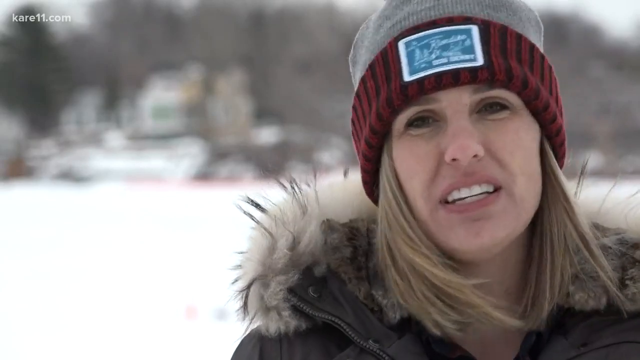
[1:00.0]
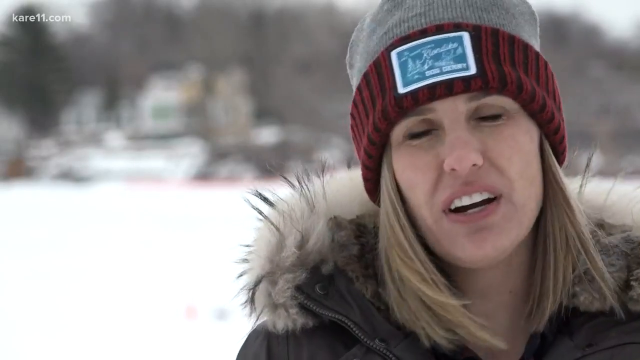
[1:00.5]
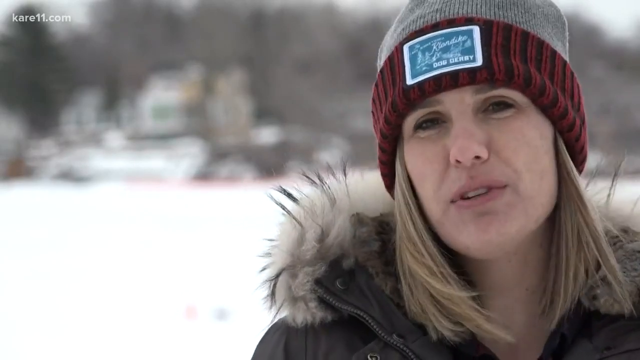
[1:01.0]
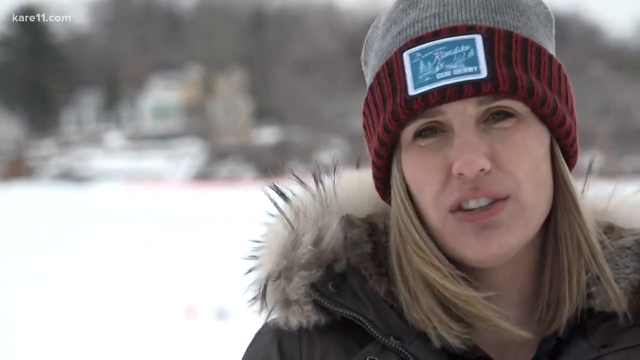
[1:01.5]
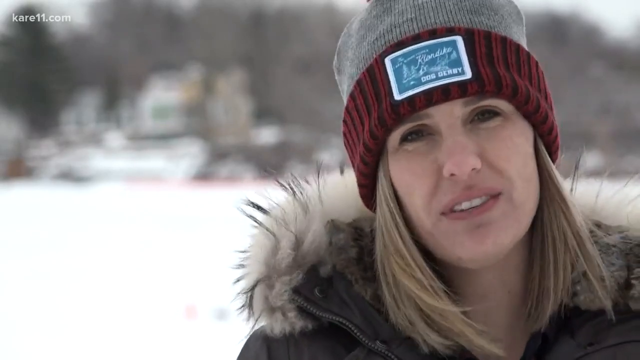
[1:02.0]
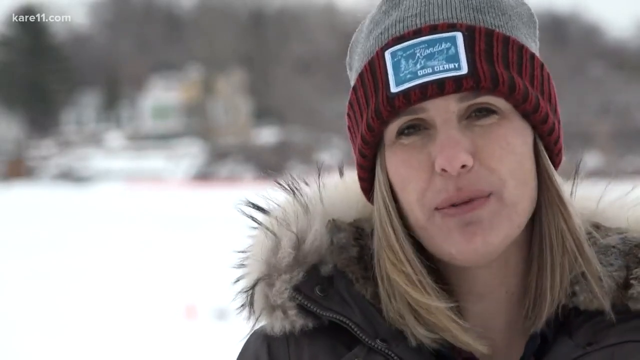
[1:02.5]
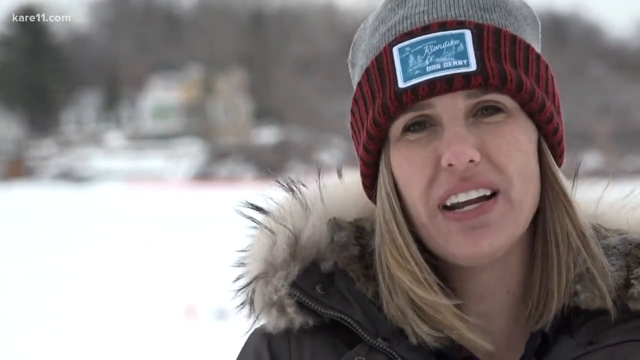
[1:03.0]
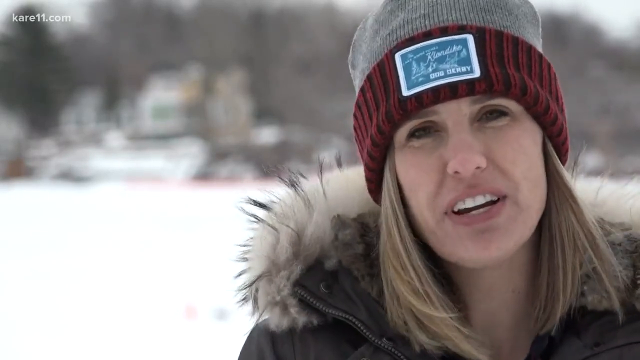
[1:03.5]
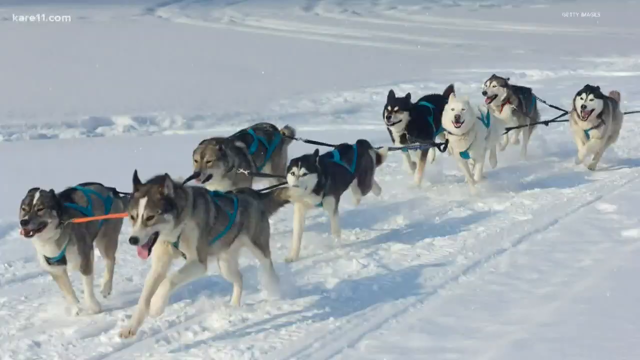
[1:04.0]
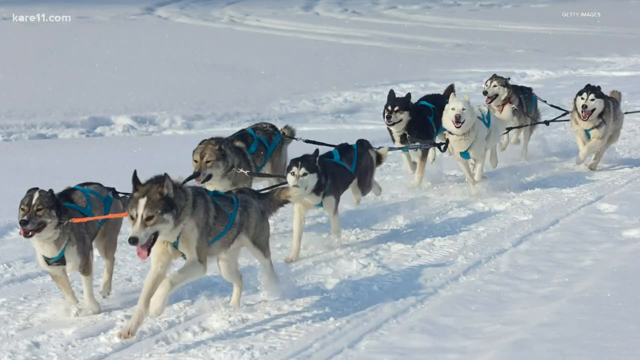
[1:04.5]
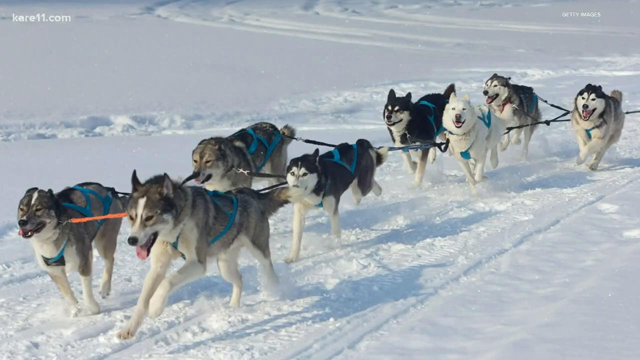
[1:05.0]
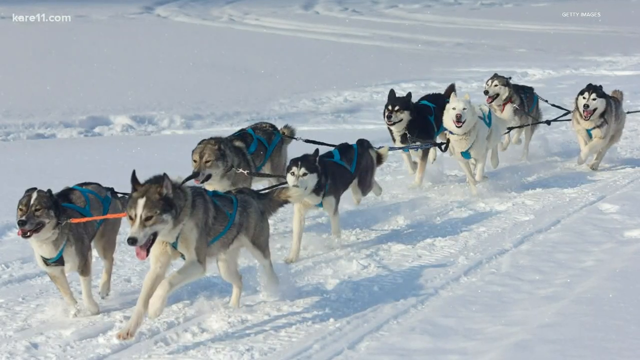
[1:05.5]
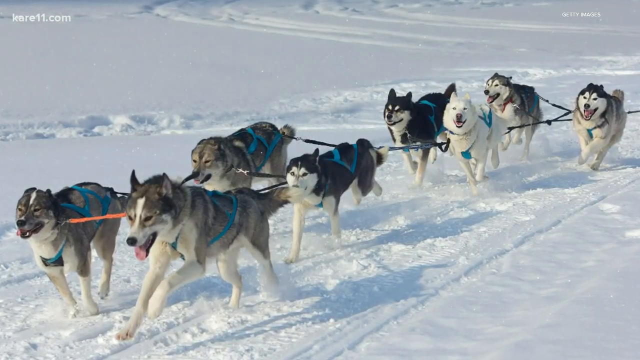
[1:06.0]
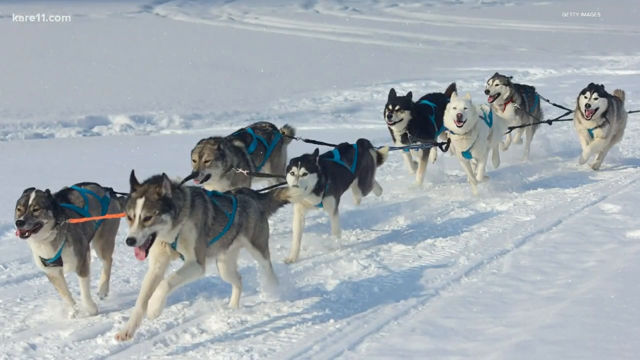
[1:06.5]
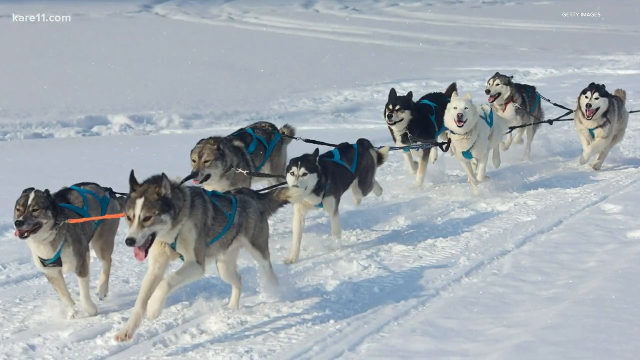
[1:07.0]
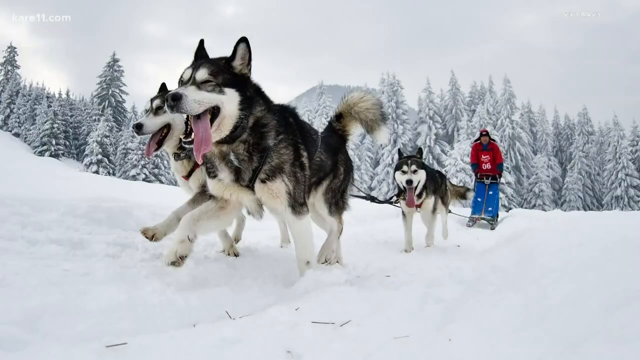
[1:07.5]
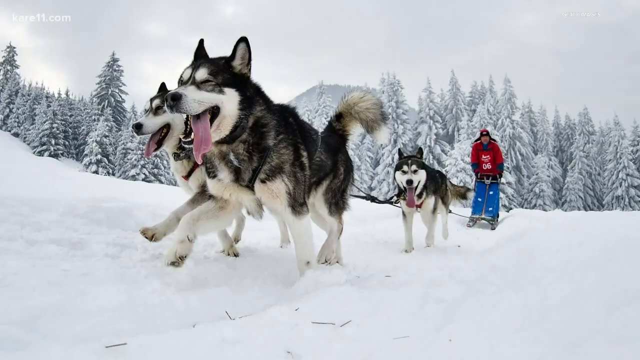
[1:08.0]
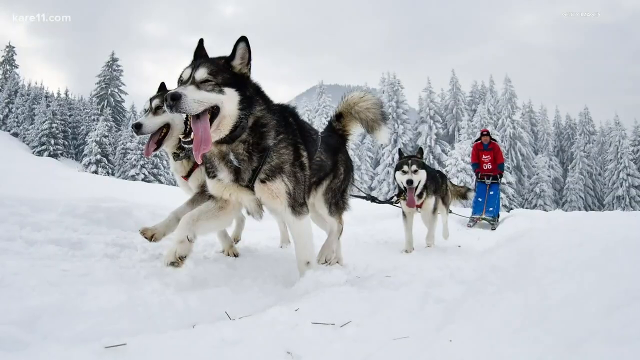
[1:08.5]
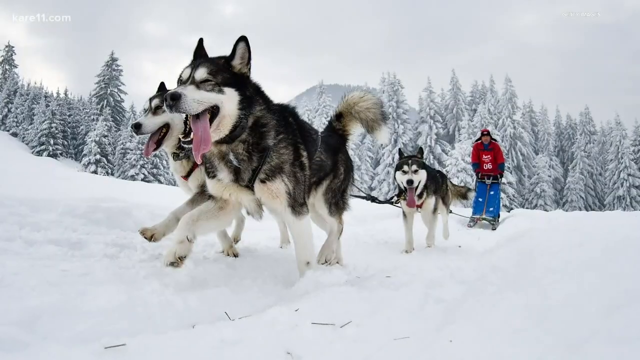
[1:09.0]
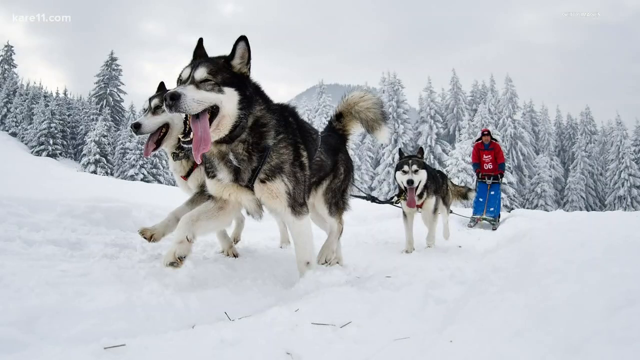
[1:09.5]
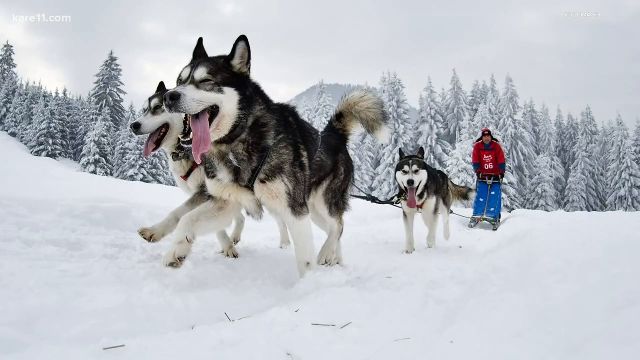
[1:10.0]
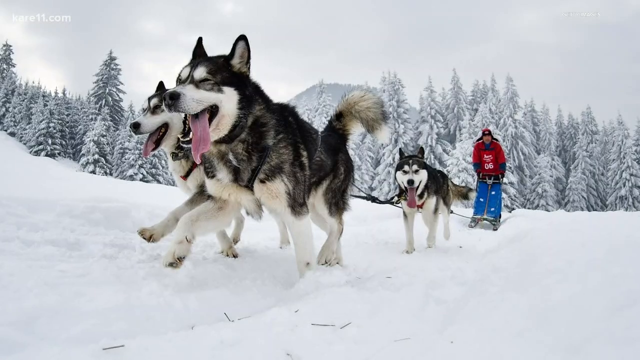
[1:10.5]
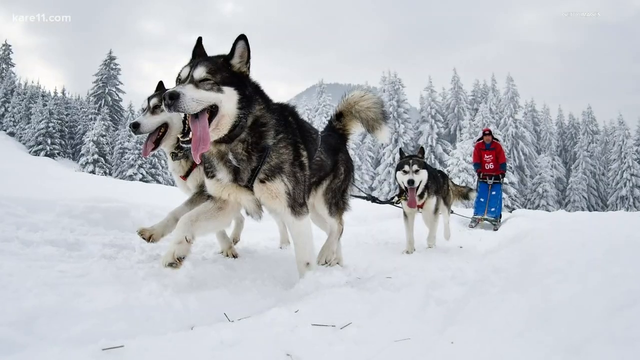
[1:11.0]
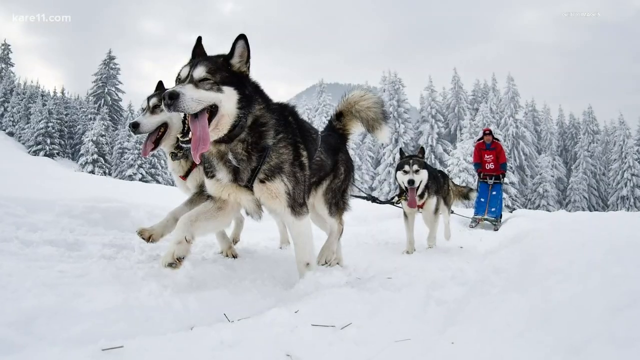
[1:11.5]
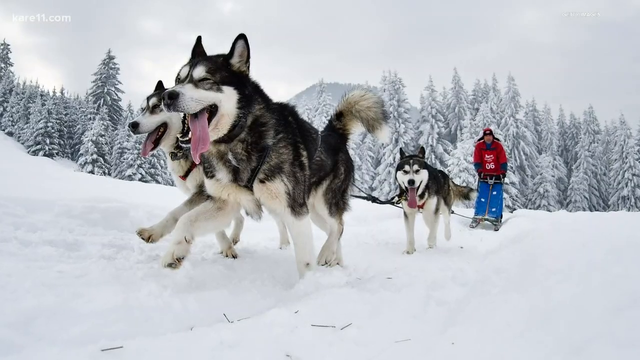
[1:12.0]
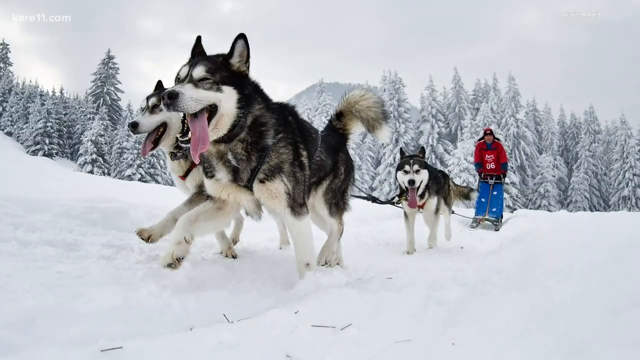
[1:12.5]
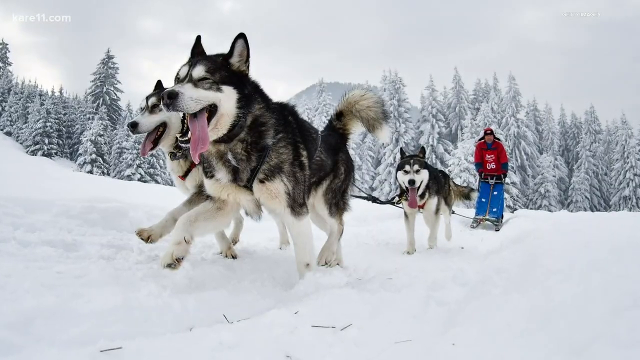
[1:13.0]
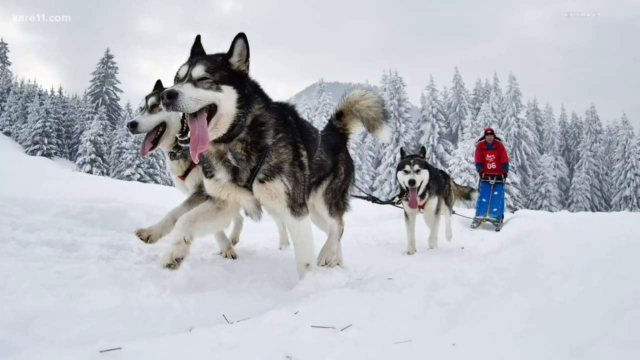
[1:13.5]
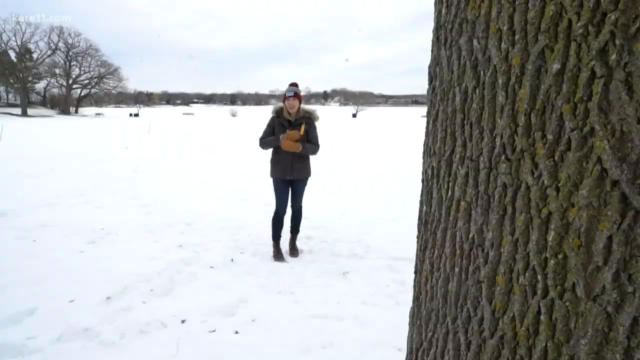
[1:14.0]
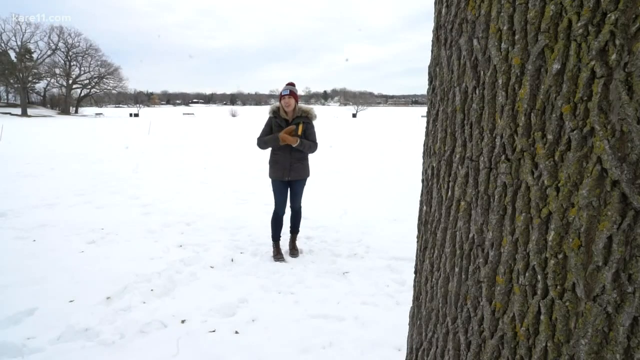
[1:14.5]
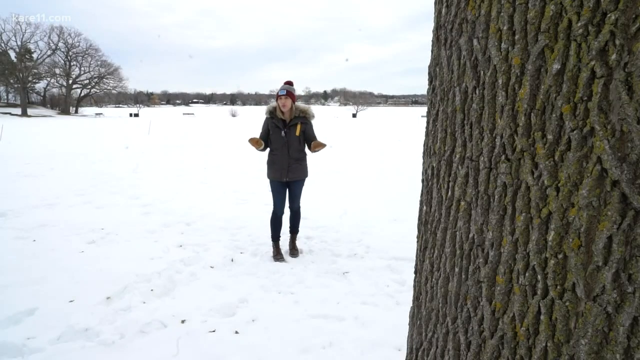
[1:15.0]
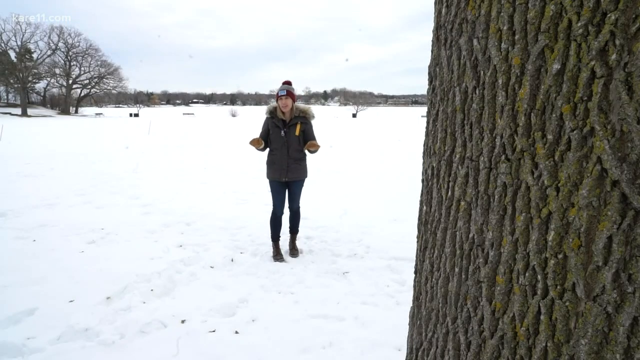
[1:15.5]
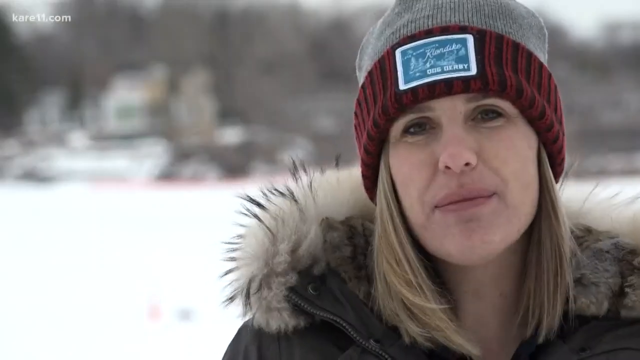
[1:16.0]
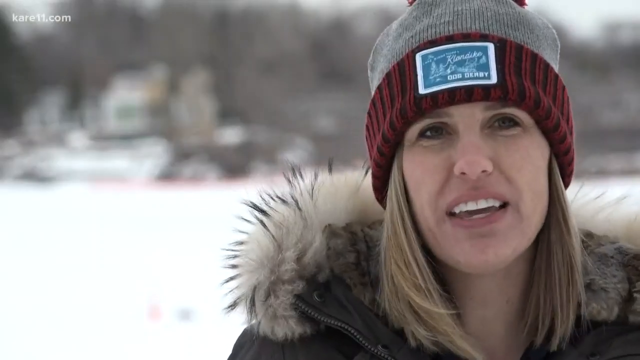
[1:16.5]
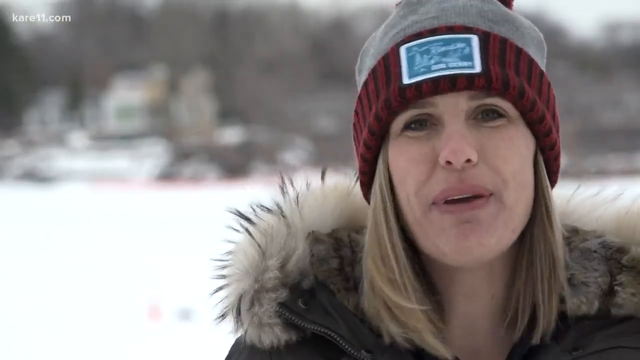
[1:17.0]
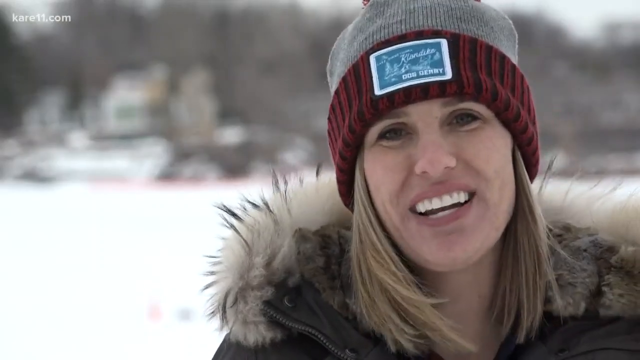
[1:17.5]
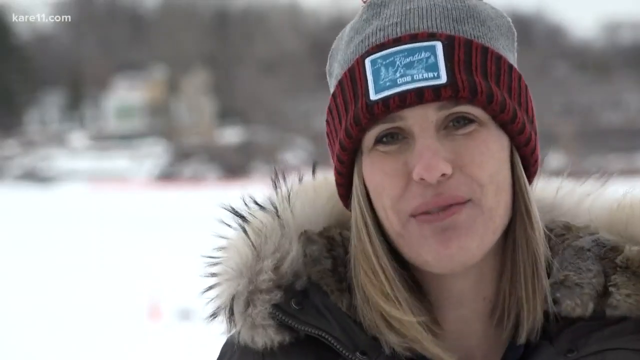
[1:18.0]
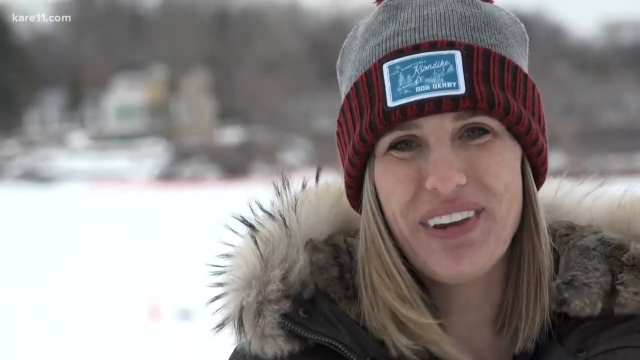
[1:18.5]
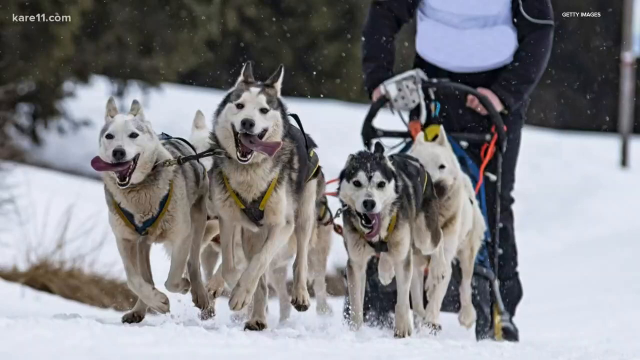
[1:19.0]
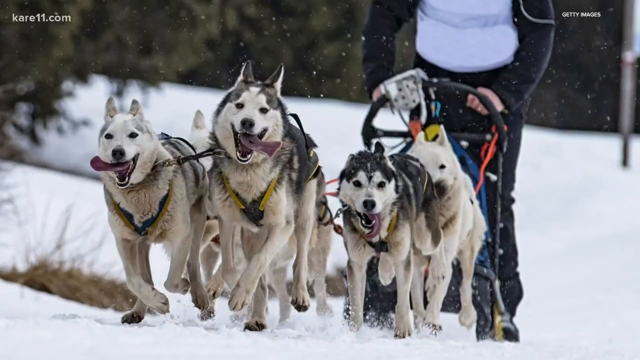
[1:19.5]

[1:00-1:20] A small white watermark reading "KARE11.com" is in the upper left corner of the screen. A woman in her early 30s with blonde hair and dark eyes wears a toboggan with a patch on the front; its rim is vertically striped in darker and lighter maroon, with a gray top. She has on a dark furry jacket with a collar, tan gloves and dark pants. A picture of a team of huskies follows, with eight dogs visible in various colors, pulling a sled. A white "Getty Images" watermark is in the top right corner.